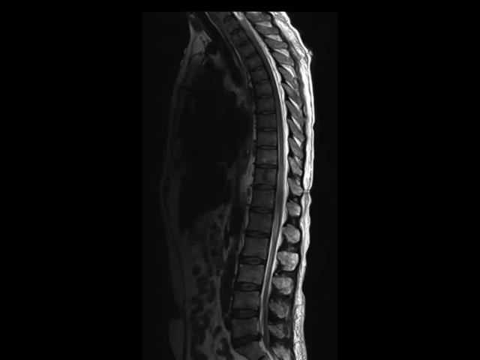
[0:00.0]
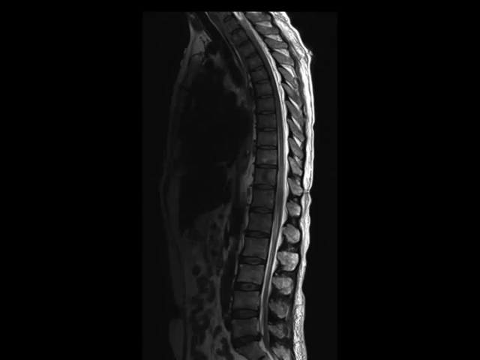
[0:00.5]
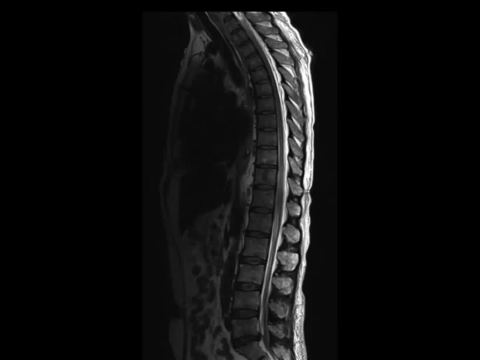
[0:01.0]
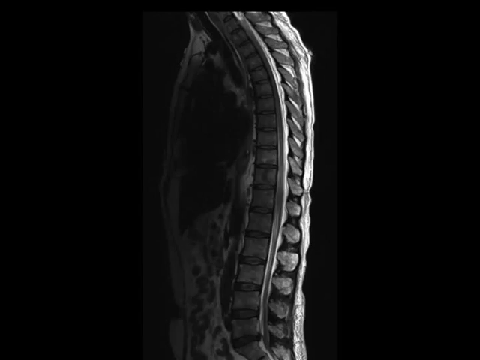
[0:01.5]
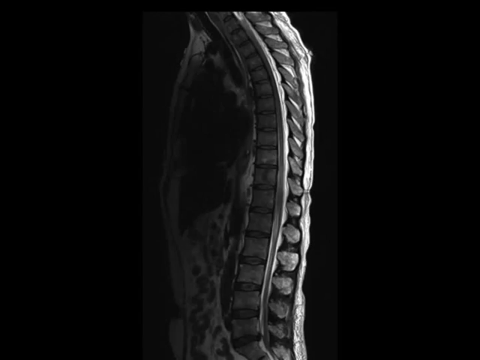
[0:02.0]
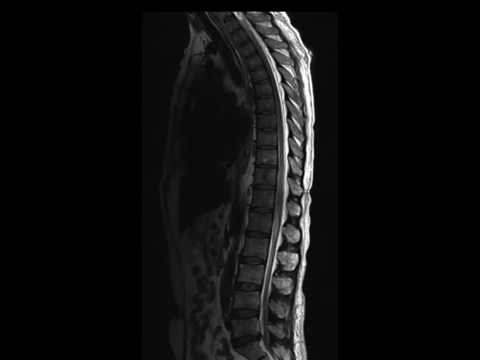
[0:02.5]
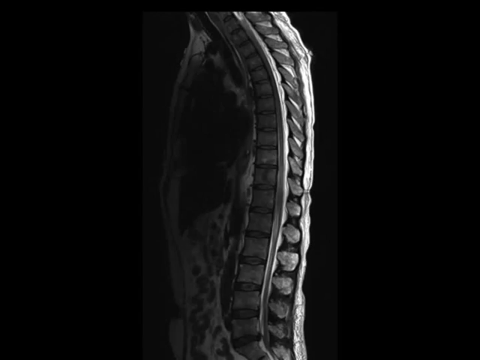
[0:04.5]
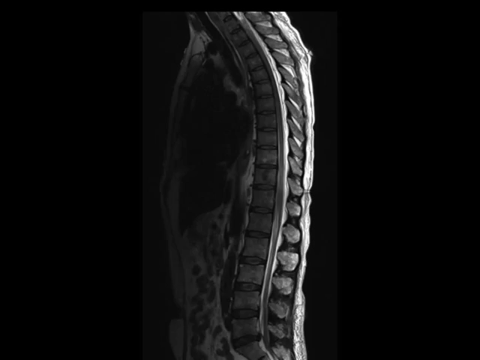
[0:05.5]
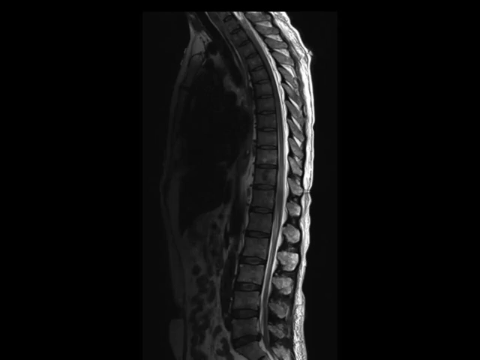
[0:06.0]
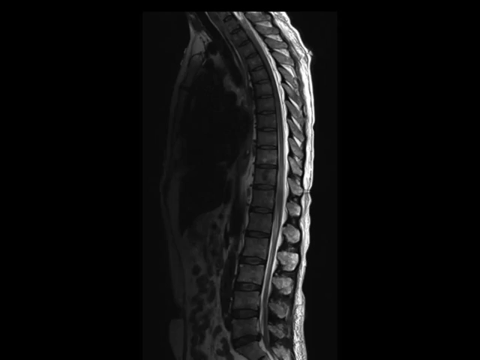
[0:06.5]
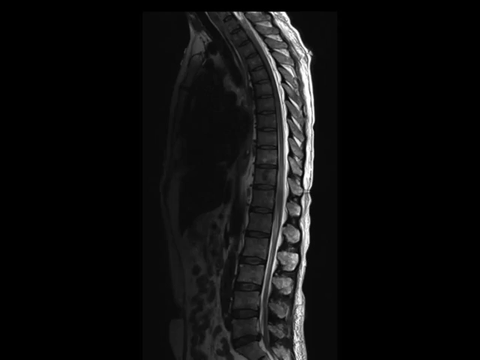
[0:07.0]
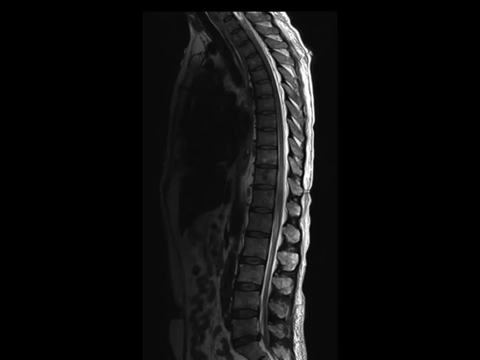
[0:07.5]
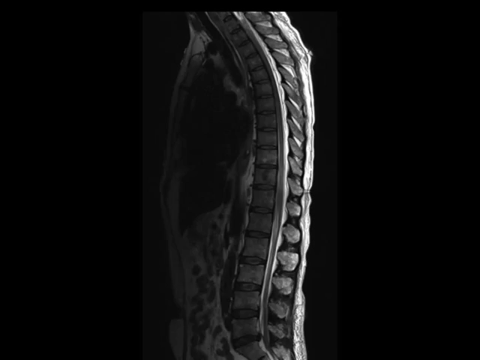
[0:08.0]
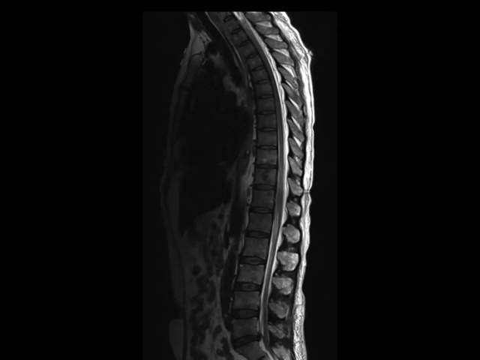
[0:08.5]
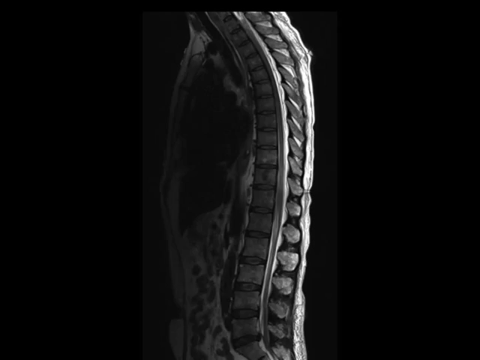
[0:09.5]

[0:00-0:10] An image of an X-ray, or what appears to be an X-ray, shows a section of a spine. The spine curves: it starts from the center of the screen at the bottom of the picture, goes up a little to the right diagonally, and then curves back to the left, up toward the top of the screen. The right outer edge of the spine is a much lighter white, as is another vertical line in the center of the spine. The left part of the spine is much more shadowed and blends in more with the black background.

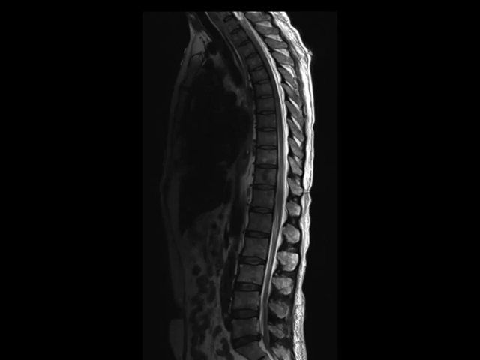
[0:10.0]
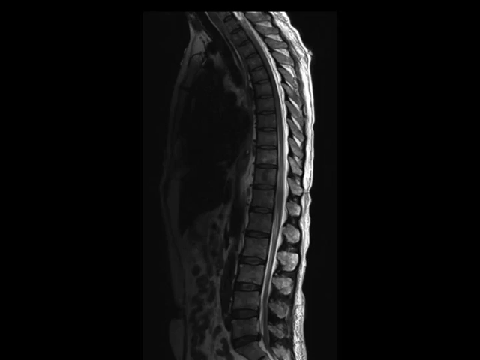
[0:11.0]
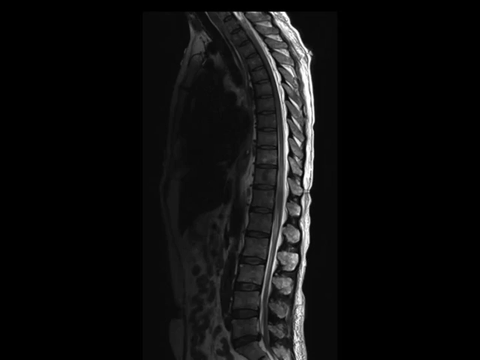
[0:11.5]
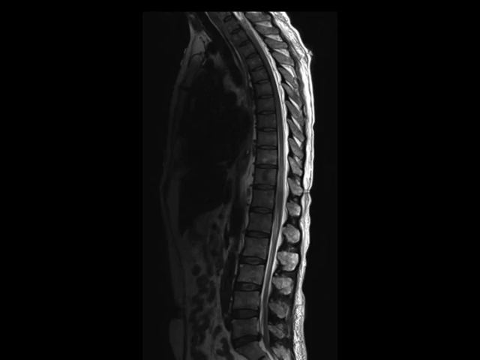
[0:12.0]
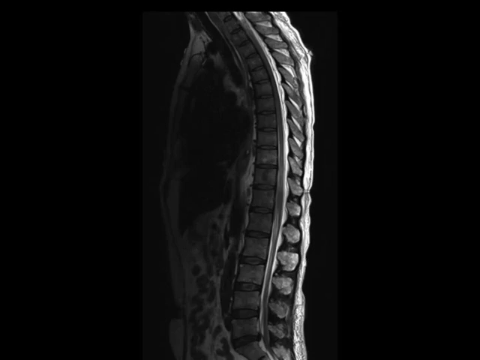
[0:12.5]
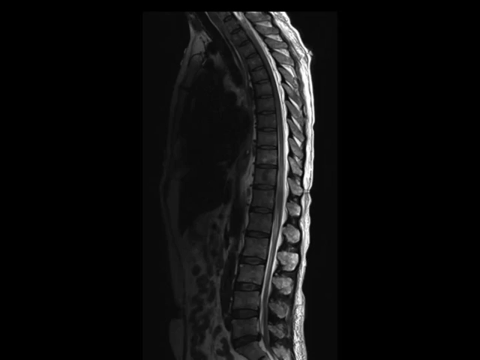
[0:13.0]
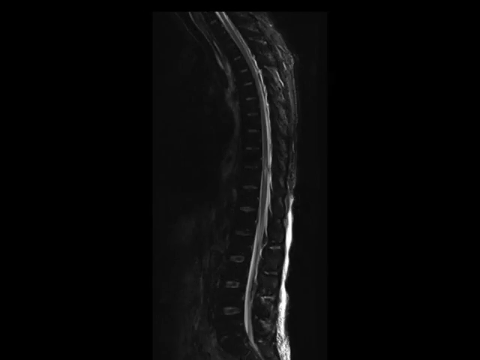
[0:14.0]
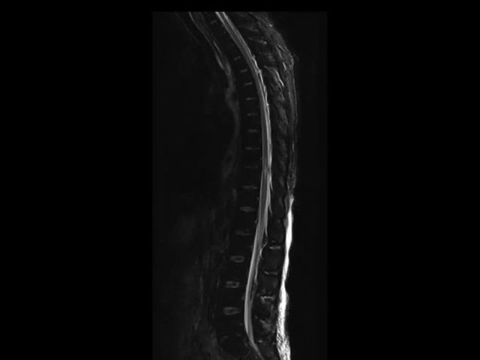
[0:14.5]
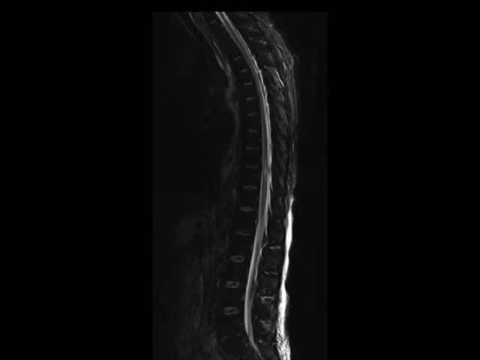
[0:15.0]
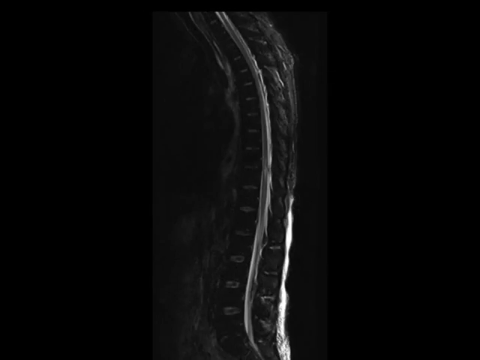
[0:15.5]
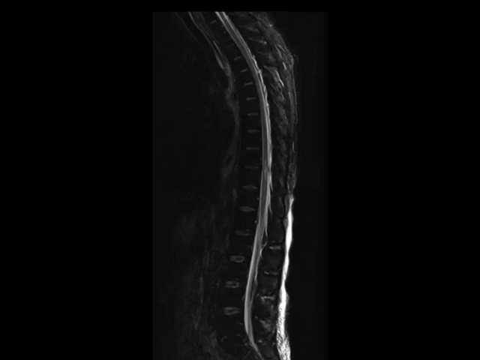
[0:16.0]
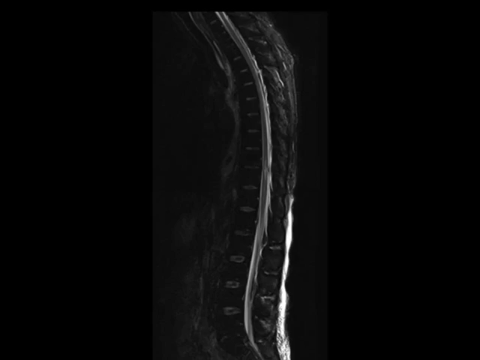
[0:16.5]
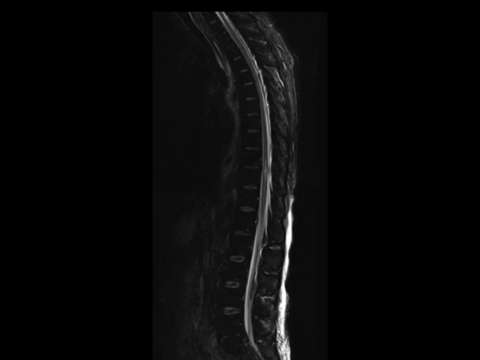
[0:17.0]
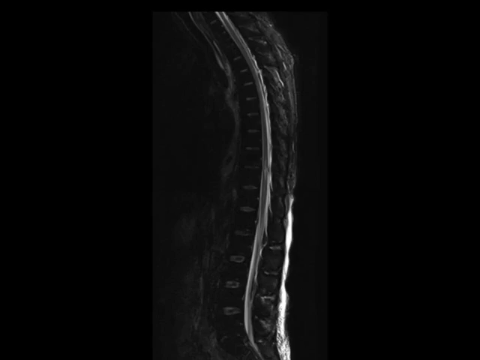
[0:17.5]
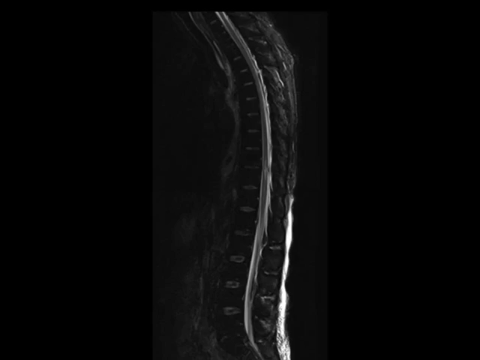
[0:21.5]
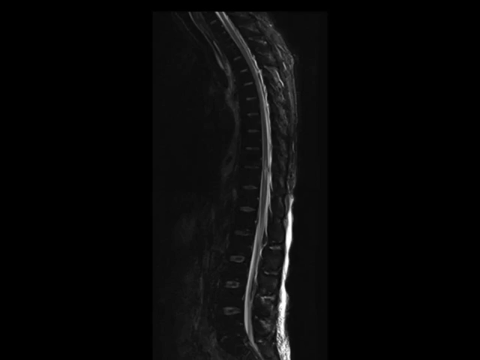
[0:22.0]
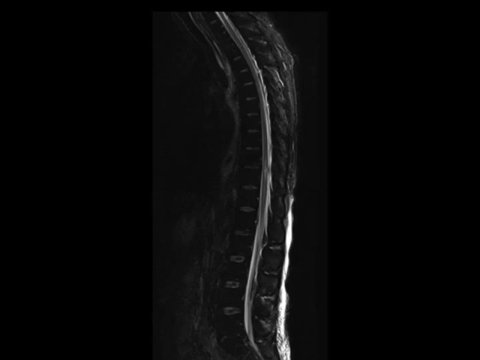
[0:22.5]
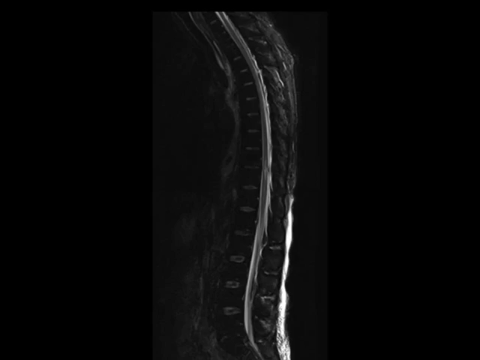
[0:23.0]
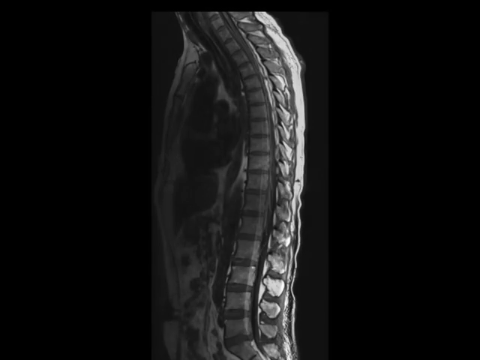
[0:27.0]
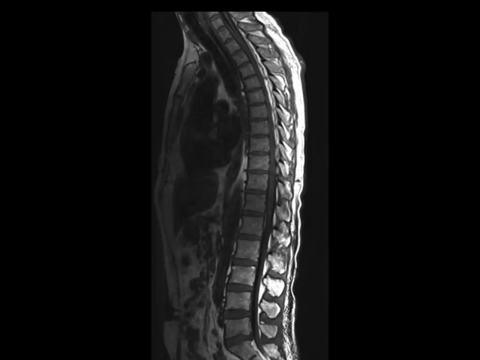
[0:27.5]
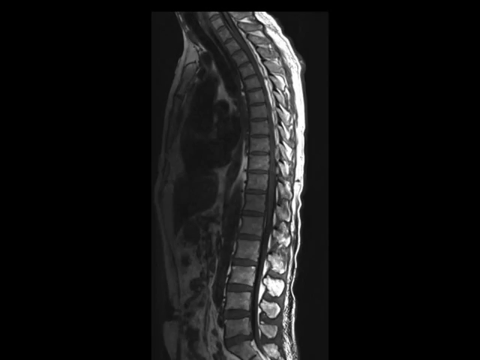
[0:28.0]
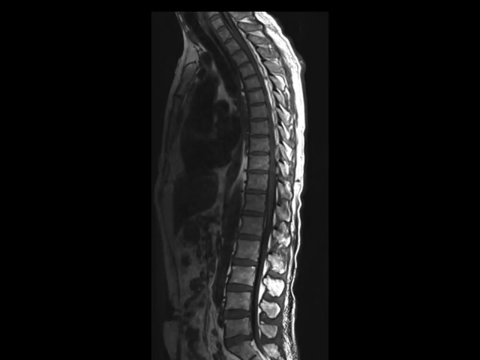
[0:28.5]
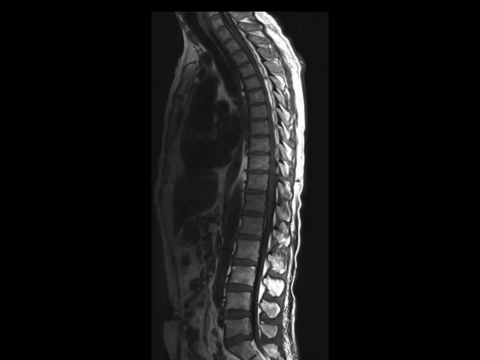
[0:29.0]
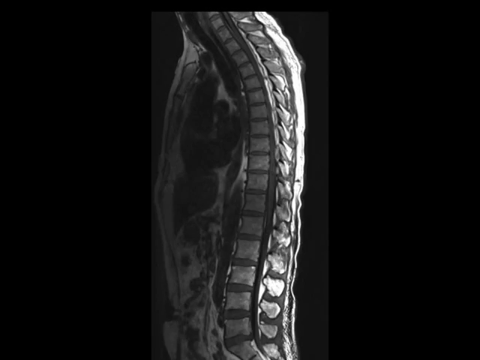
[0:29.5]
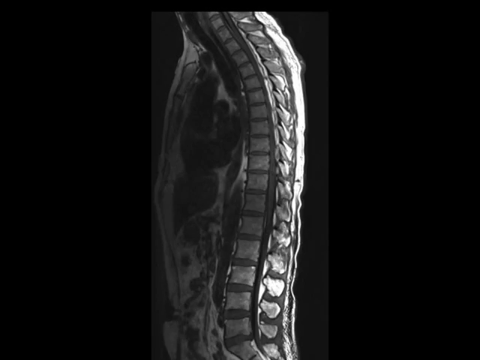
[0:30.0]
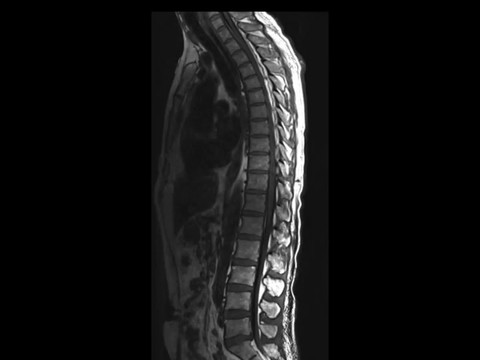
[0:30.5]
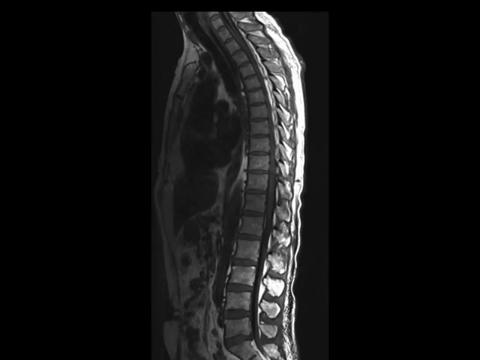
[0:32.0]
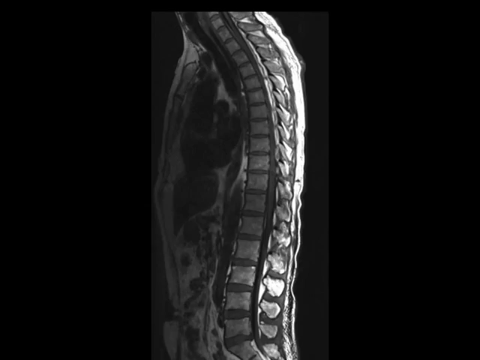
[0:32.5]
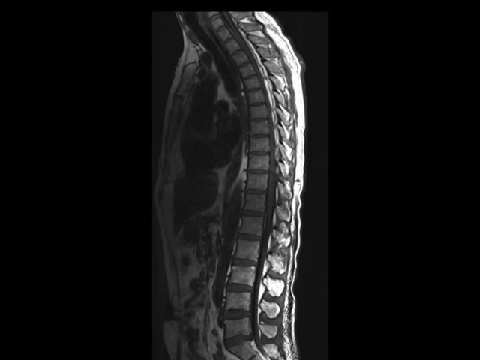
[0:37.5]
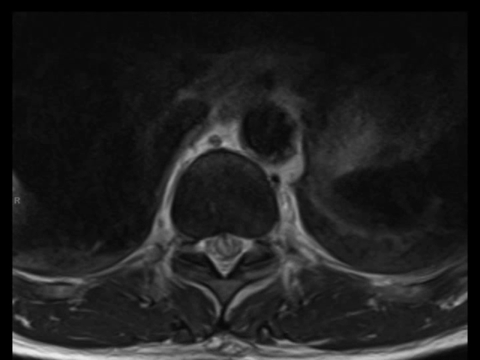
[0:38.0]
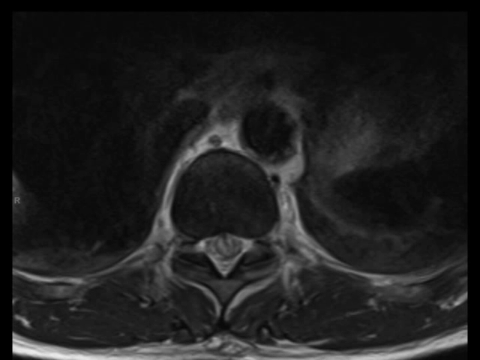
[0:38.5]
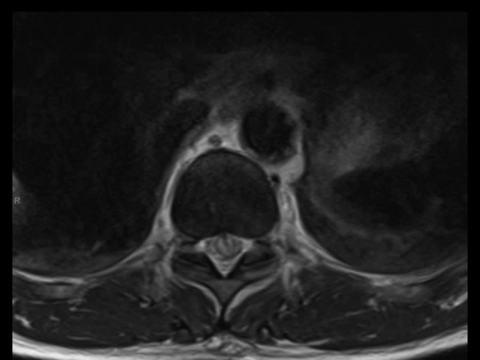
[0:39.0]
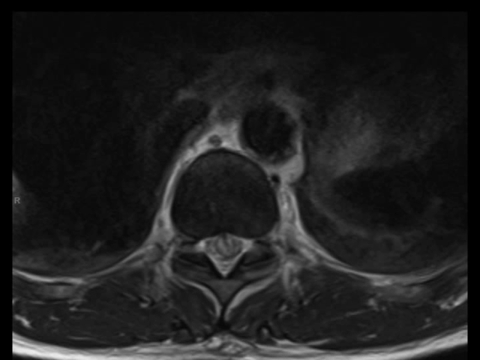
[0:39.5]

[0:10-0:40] The background of the picture is a very dark black. In the center of the square is an image of part of a spine, or what looks to be a spine, possibly an X-ray. The right vertical edge of the spine is a much lighter white, along with a vertical line in the center of the spine. The left side of the spine is much more shadowed and darker and blends in with the black background. Many ribs or vertebrae or some type of object, horizontal blocks, are between the left-hand side and the center of the spine, and also between the center line and the right-hand vertical line. The spine curves a little: it starts at the bottom center of the screen, curves a little to the right, and then back up to the left. The image then changes to a much darker image of the spine in which most of it is very hard to make out other than the whiter center line and the whiter line to the right. It then changes to another view of the spine, or what appears to be a spine, and then shows another X-ray image of what might be a skull.